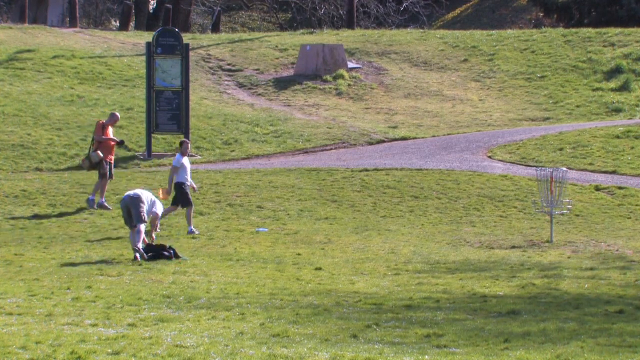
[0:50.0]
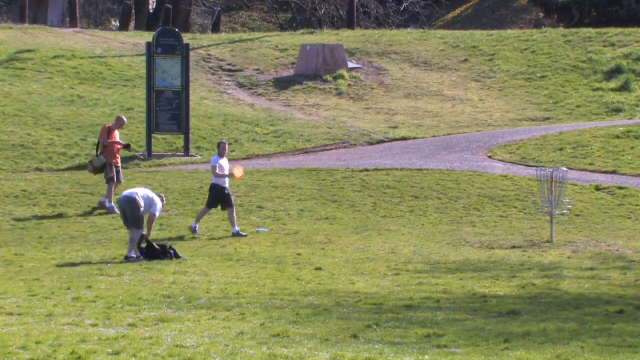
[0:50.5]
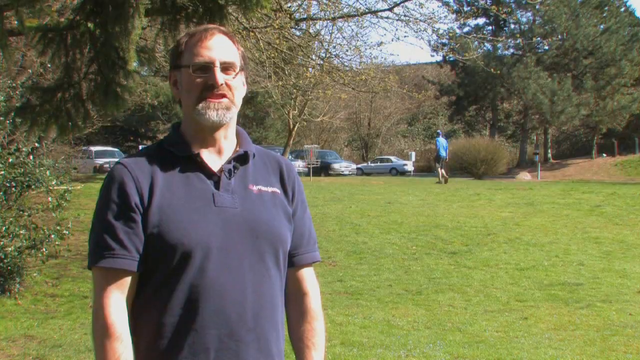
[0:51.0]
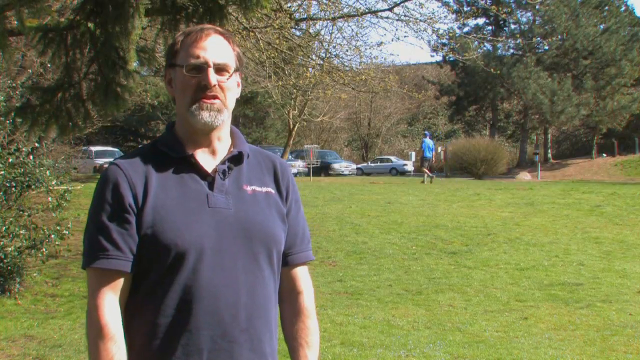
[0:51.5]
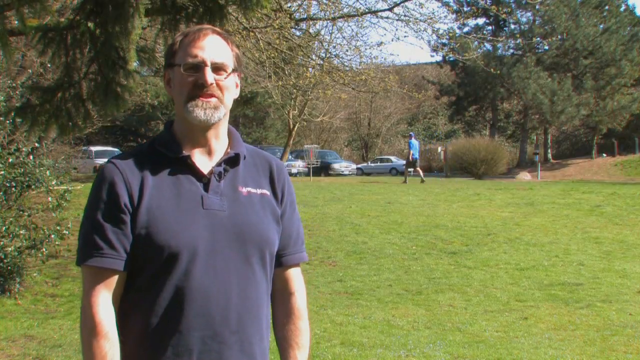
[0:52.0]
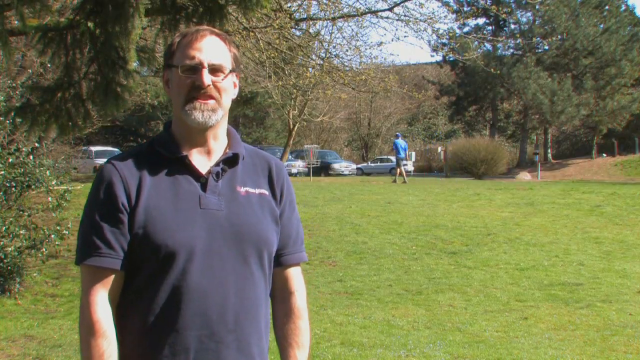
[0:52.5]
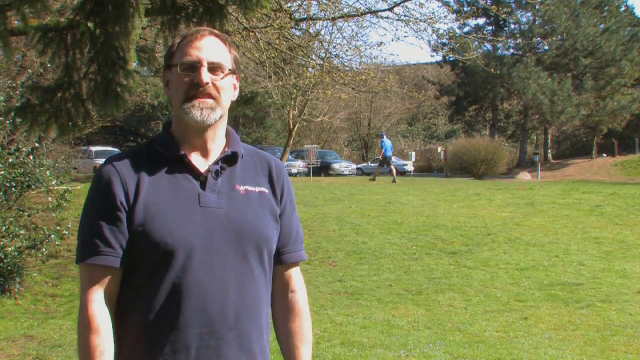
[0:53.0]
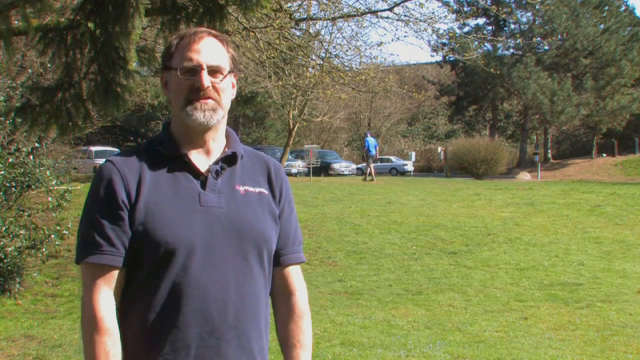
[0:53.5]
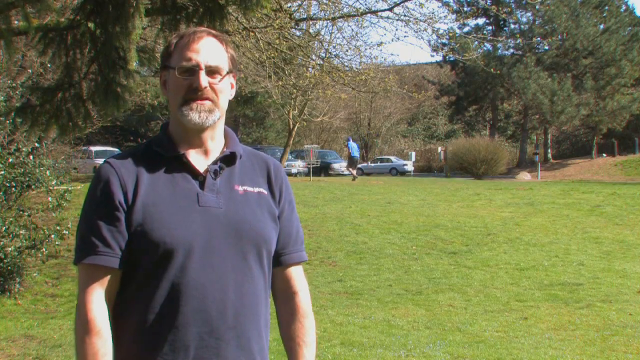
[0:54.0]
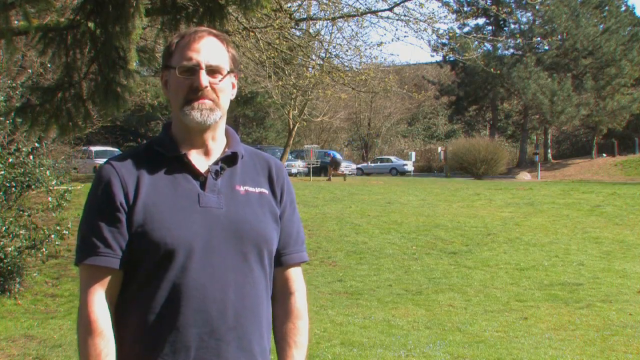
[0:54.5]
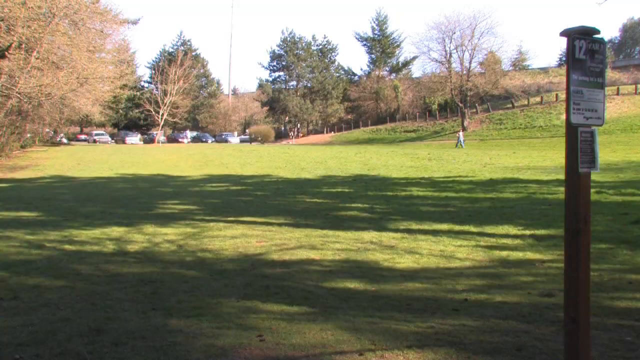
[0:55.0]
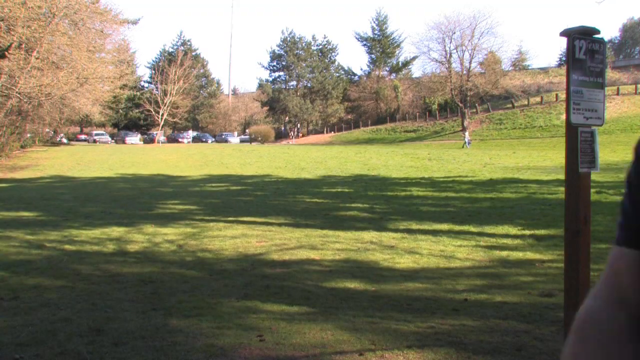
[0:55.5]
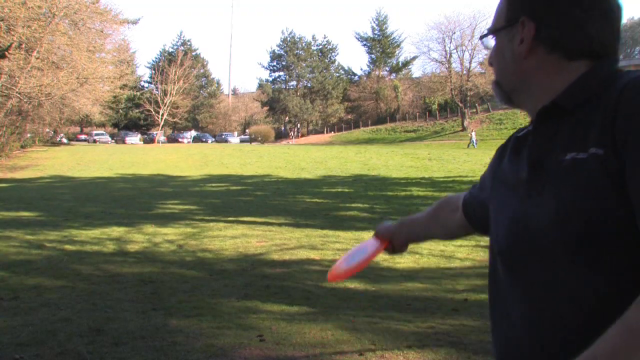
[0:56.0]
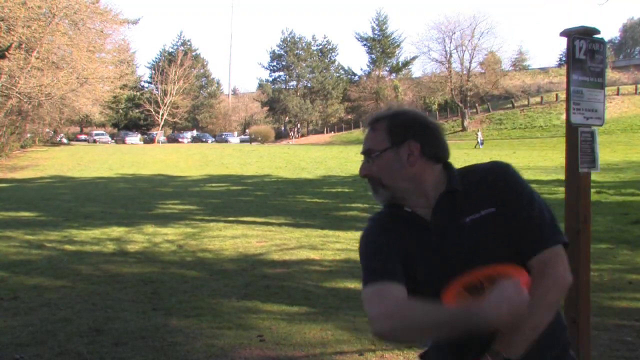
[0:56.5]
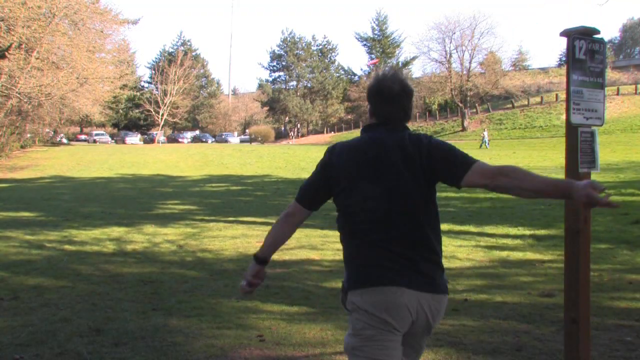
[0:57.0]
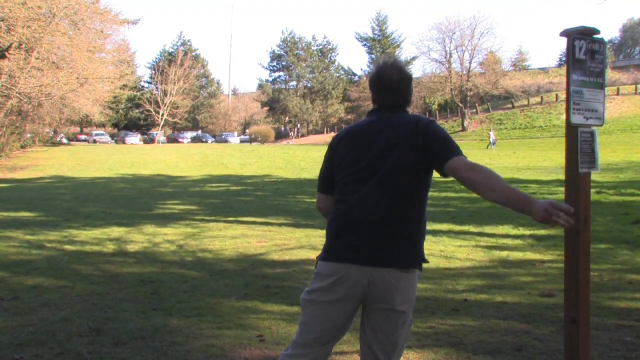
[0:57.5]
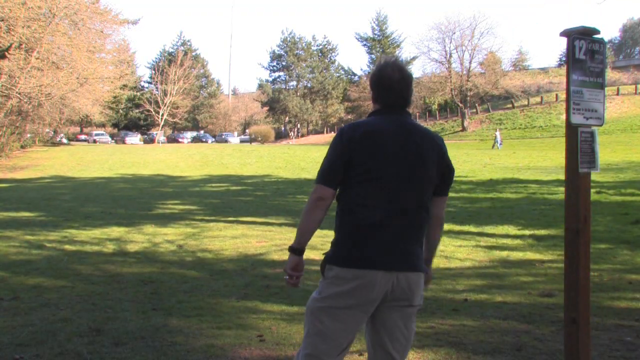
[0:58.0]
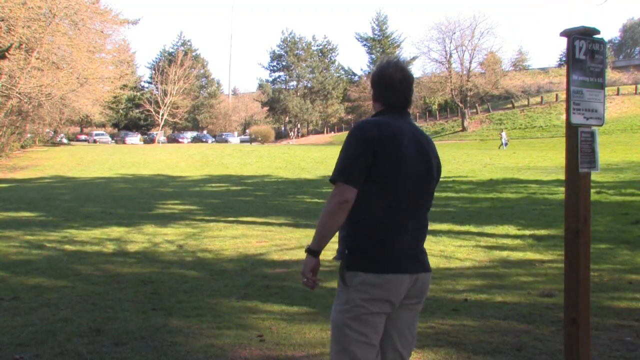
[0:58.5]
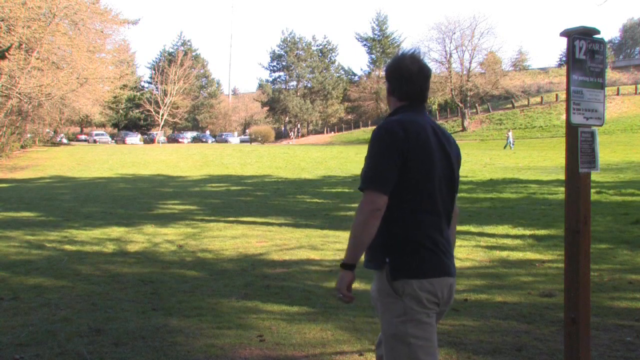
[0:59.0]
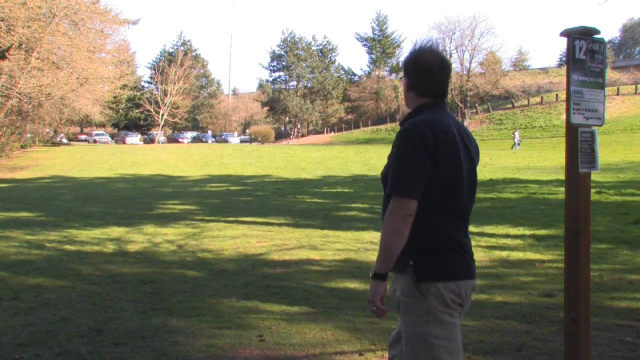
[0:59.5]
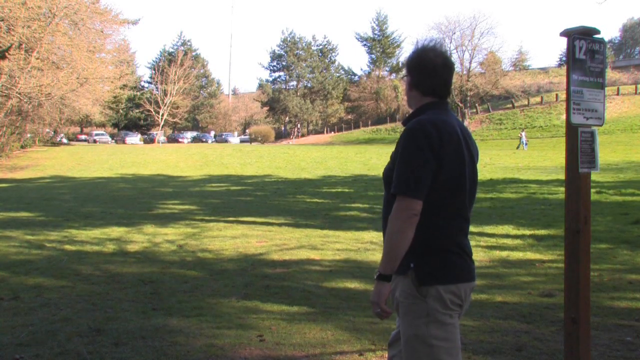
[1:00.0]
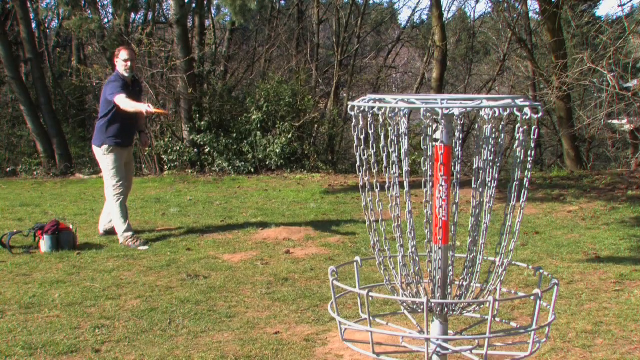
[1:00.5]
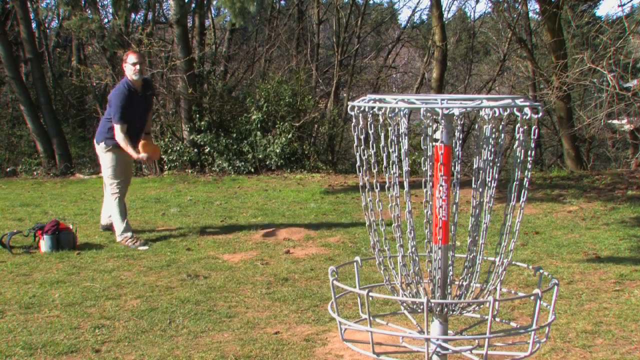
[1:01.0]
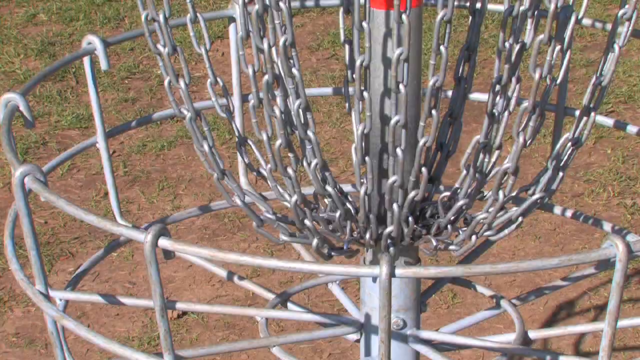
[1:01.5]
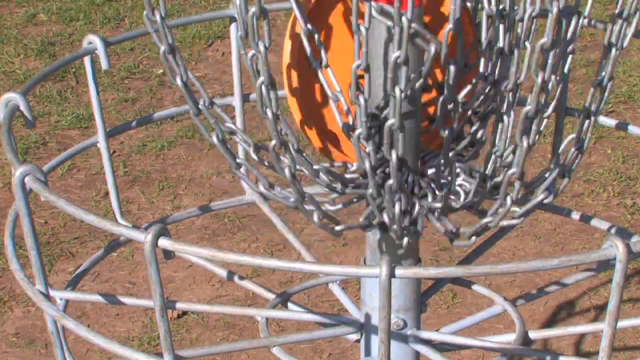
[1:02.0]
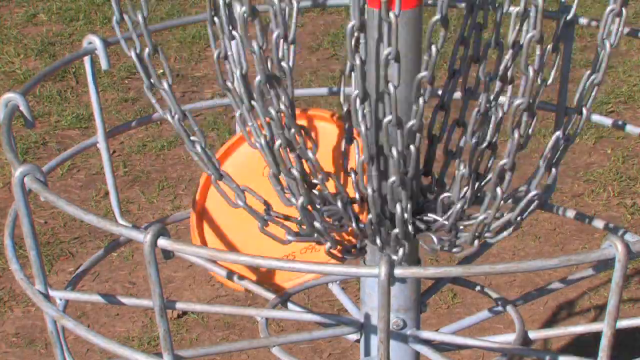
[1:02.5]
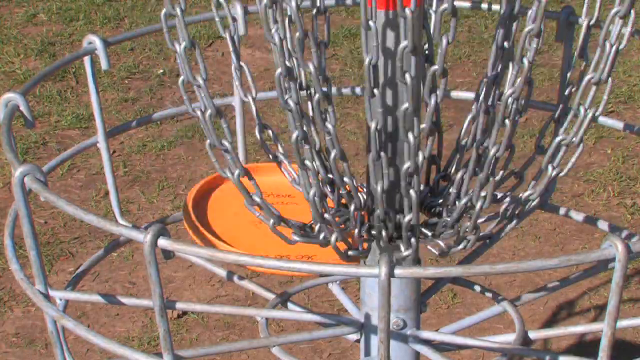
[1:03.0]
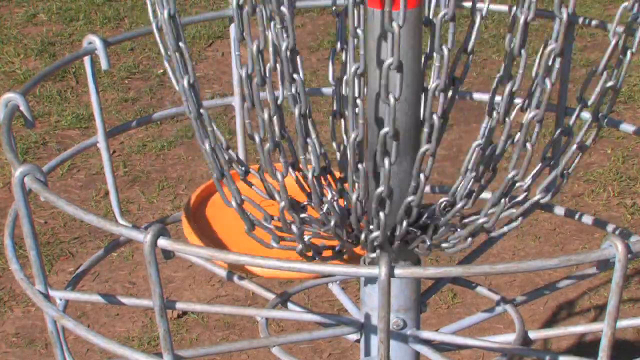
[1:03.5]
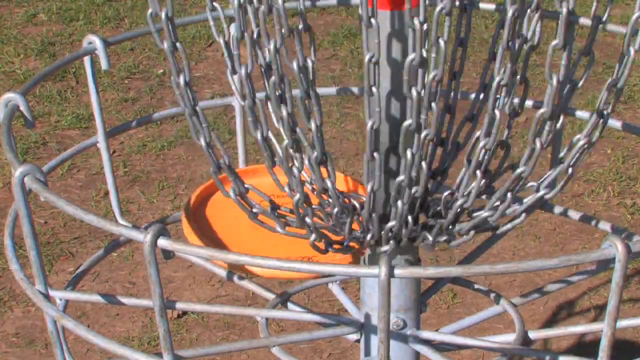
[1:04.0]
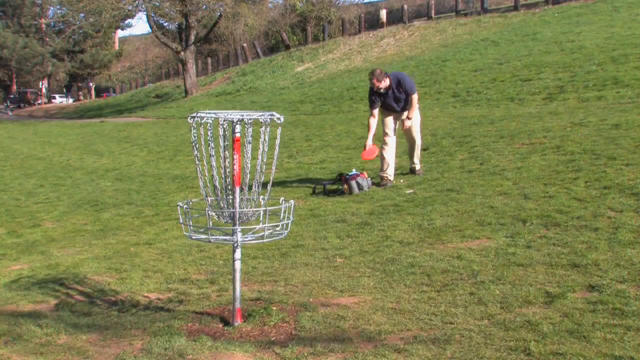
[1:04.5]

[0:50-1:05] The people in the park seem to be packing up and leaving, and the camera goes back to the man explaining, with people behind him walking back to their cars. He then demonstrates how to throw the frisbee. Shadows of the trees and sunlight fall on the grassy park field. He looks out at his frisbee to see where it goes. He then plays at the frisbee chain, tossing the frisbee into the center. The chain looks to be made of metal and is stuck into the ground. The frisbee he uses is orange, and the chains rattle from the frisbee being thrown into the center. He throws with his right hand each time. He then tosses the orange frisbee back into his frisbee golf bag.